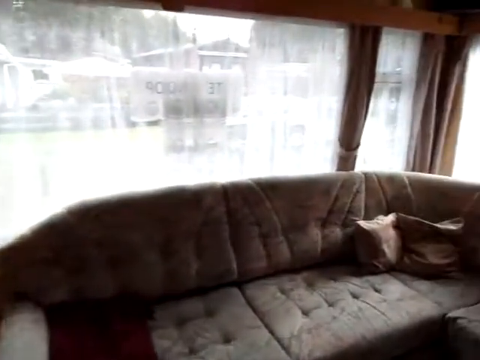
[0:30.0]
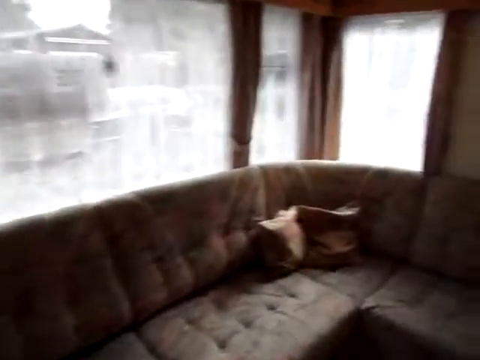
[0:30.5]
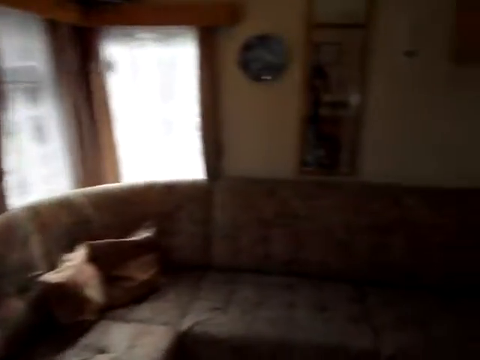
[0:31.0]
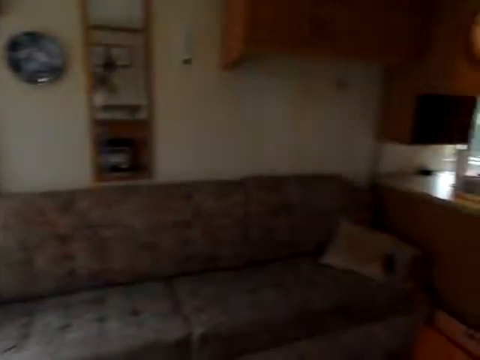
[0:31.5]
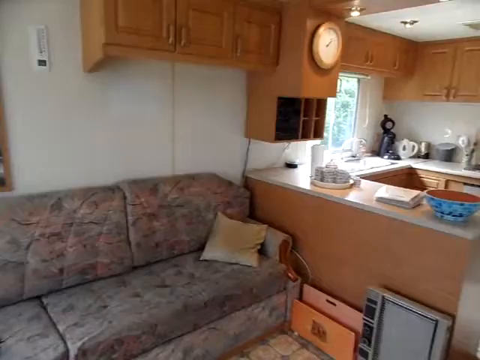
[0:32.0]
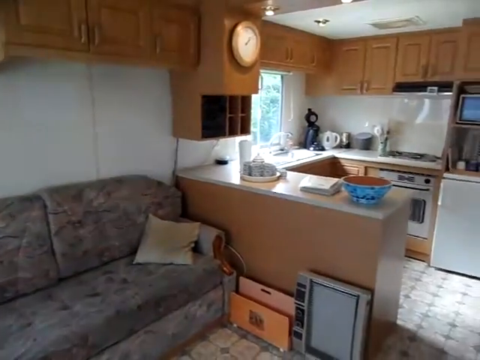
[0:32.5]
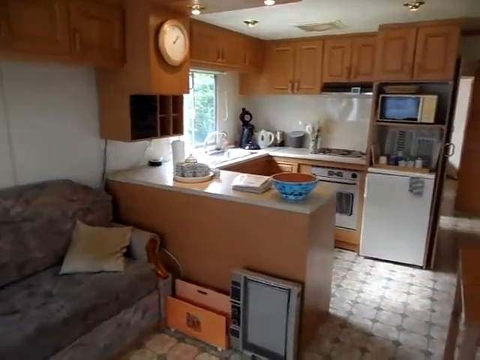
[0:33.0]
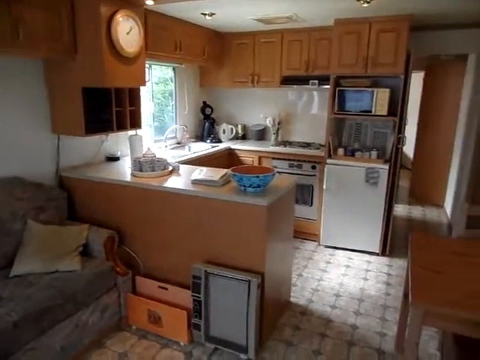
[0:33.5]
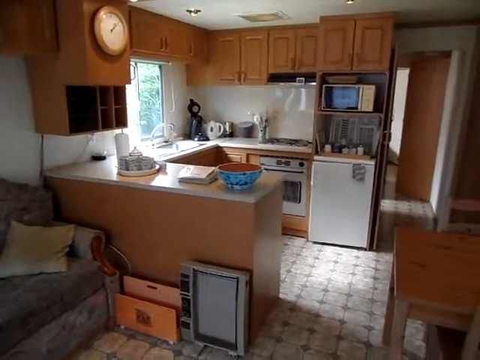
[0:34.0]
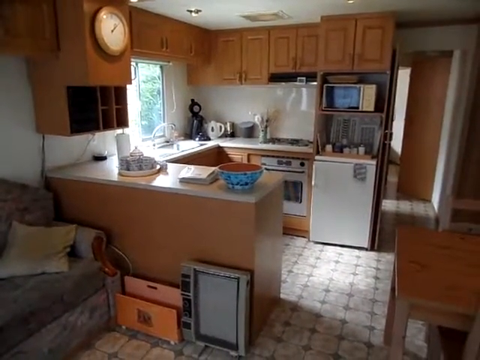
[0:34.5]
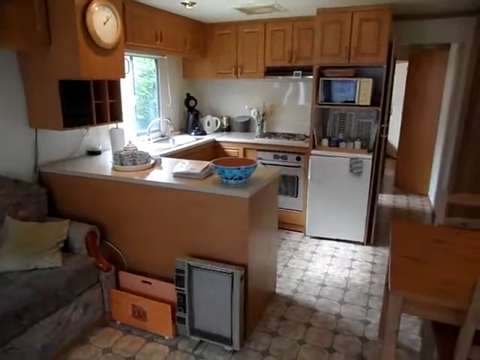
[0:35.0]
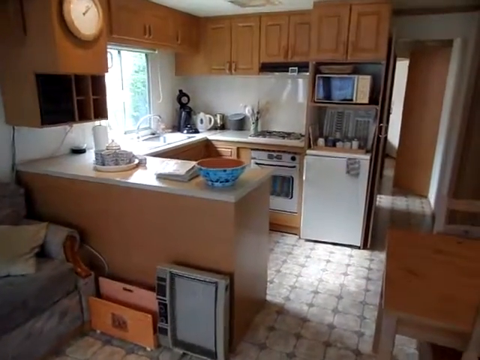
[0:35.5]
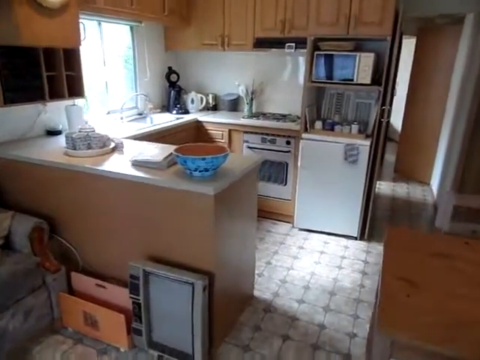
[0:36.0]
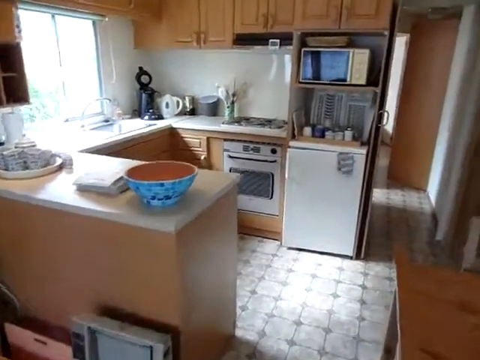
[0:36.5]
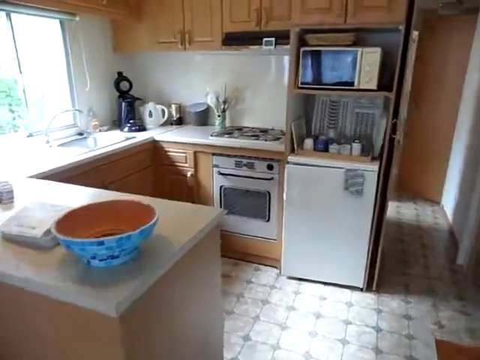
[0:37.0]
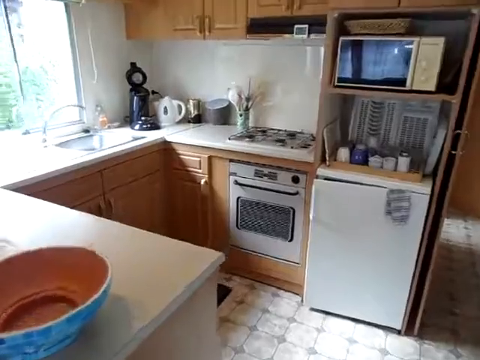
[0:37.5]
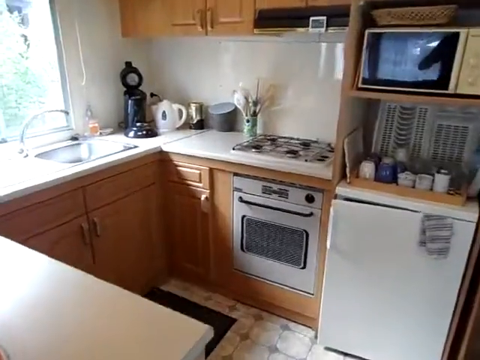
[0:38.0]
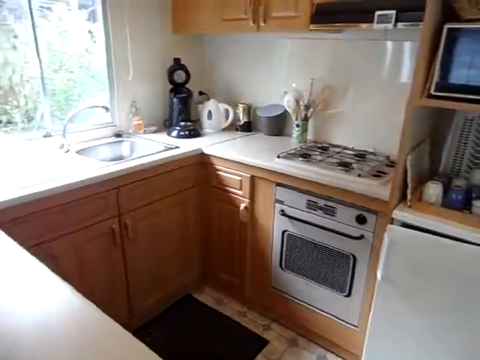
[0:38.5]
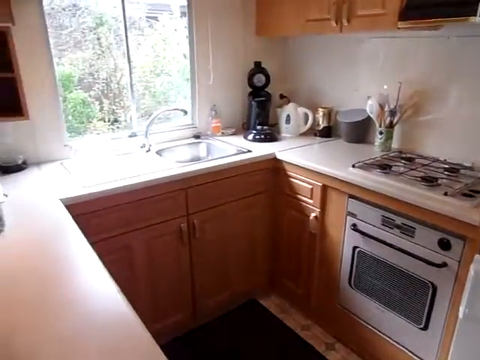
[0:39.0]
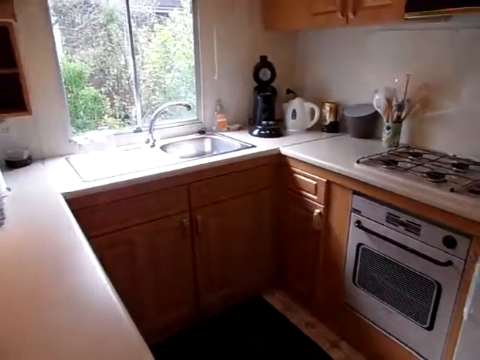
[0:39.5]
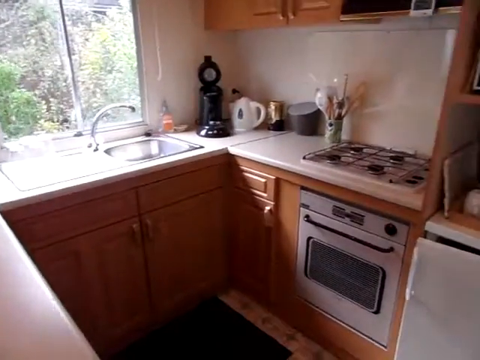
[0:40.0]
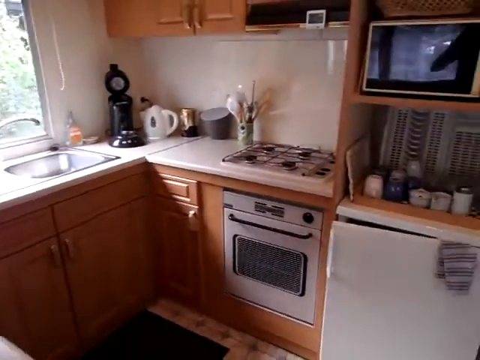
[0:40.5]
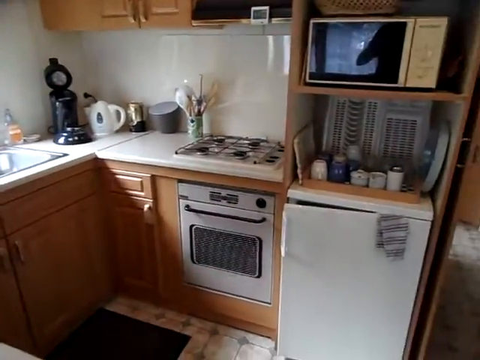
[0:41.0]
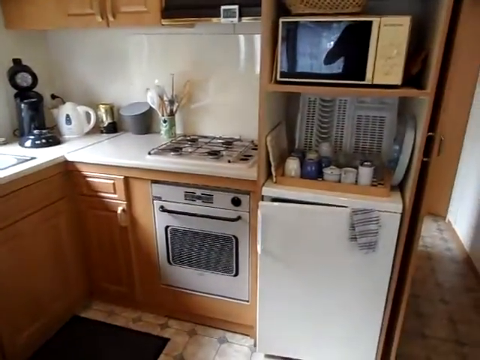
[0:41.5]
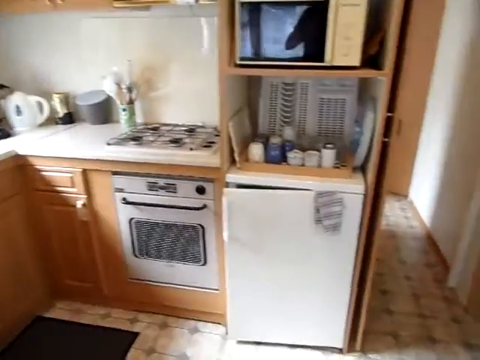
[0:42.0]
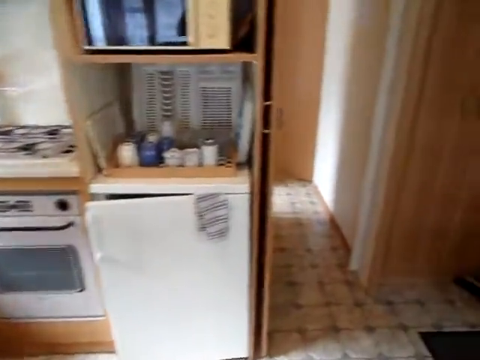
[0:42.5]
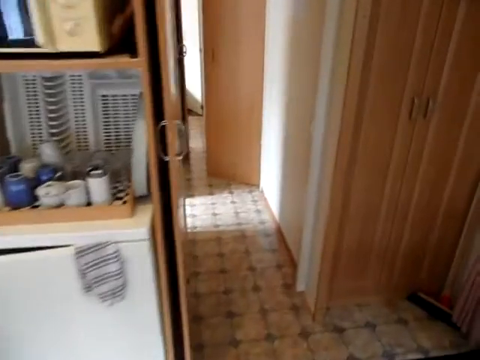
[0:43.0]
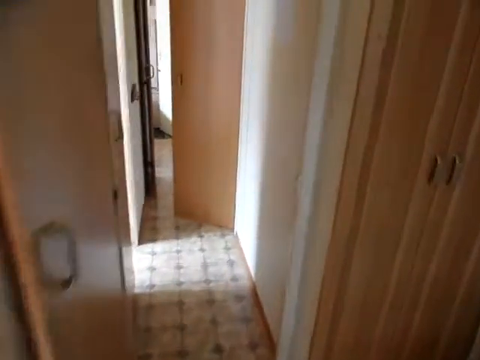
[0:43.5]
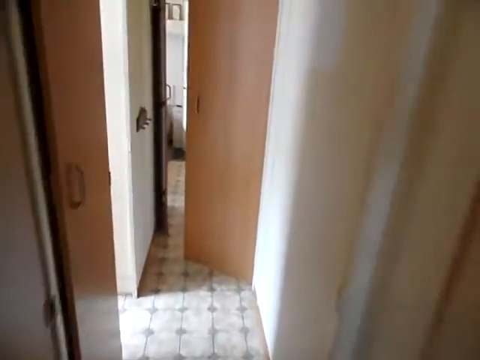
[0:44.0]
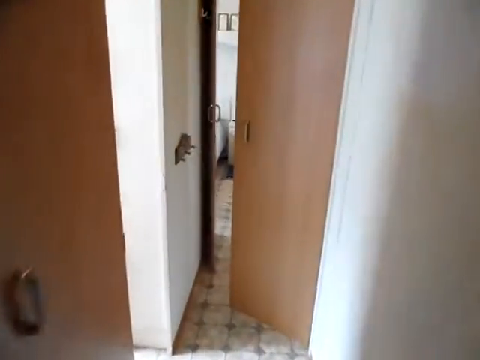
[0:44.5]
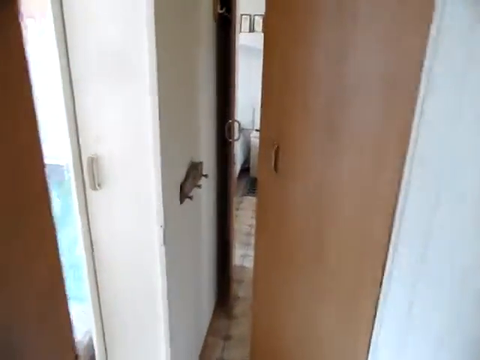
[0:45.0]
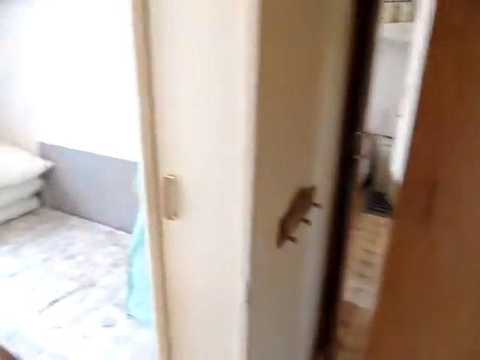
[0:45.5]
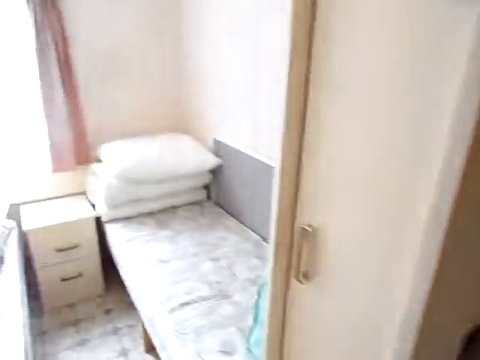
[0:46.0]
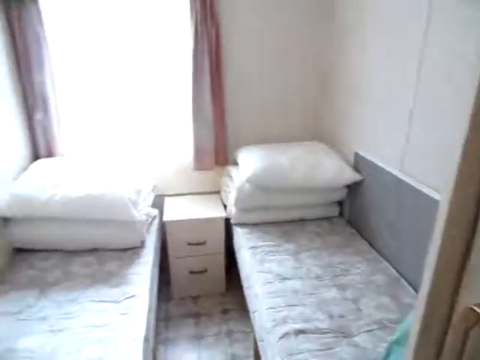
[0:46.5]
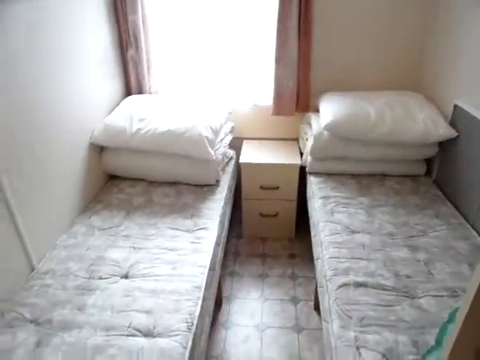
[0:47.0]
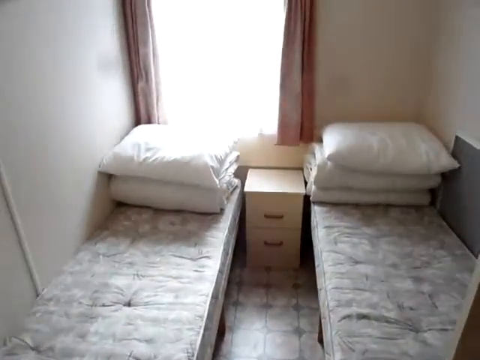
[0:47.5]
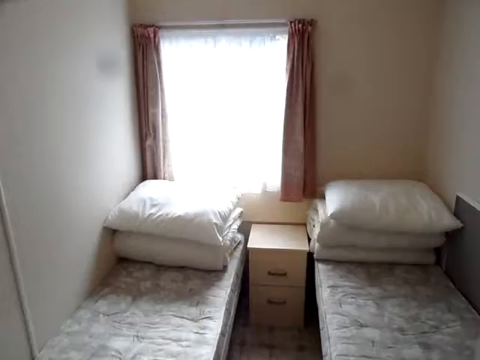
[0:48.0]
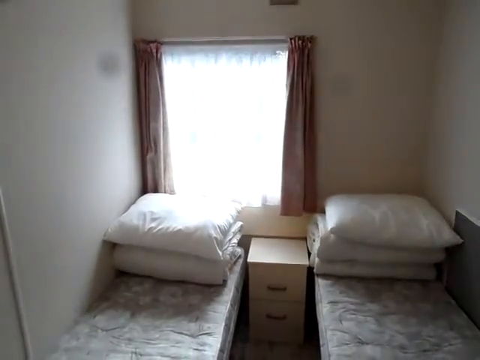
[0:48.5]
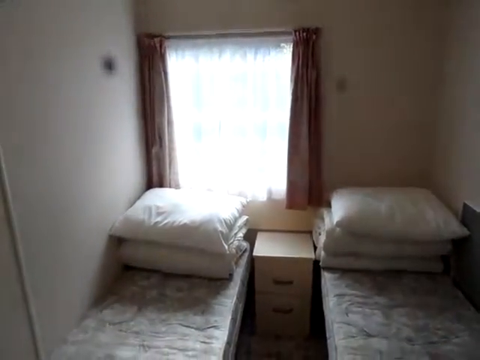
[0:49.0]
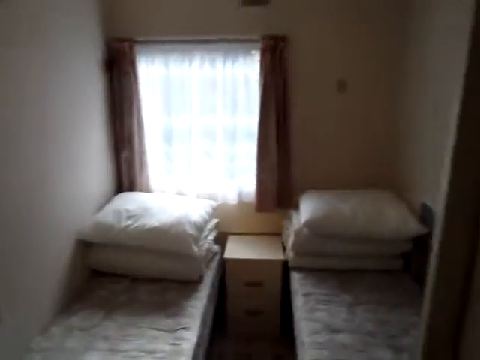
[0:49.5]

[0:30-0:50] The area holds a lot of furniture, including many couches and beds, along with clocks and a number of windows on the side of the house.